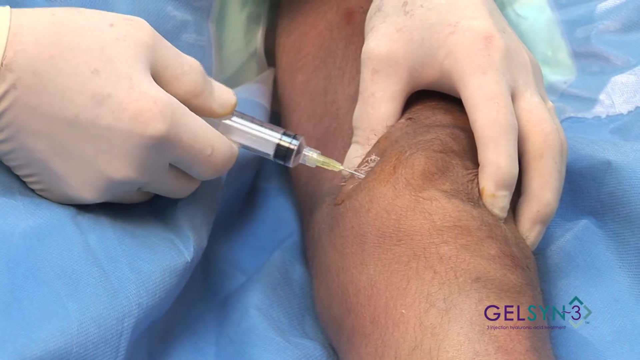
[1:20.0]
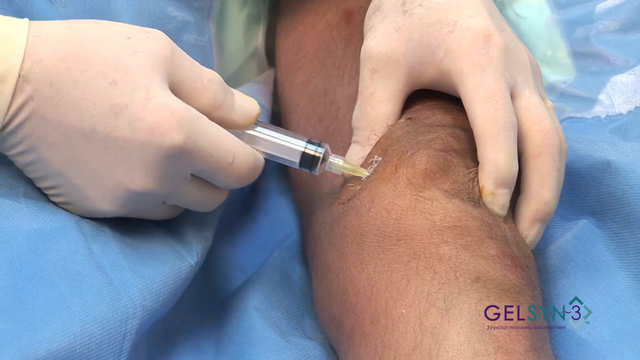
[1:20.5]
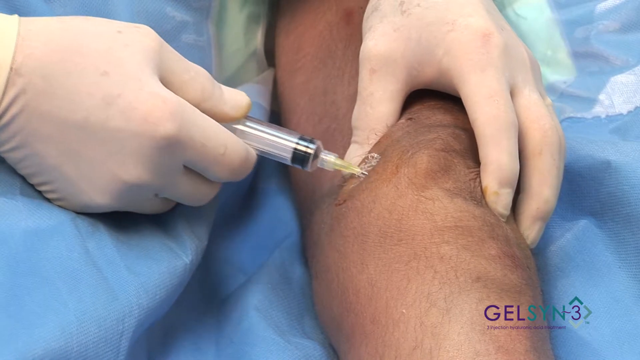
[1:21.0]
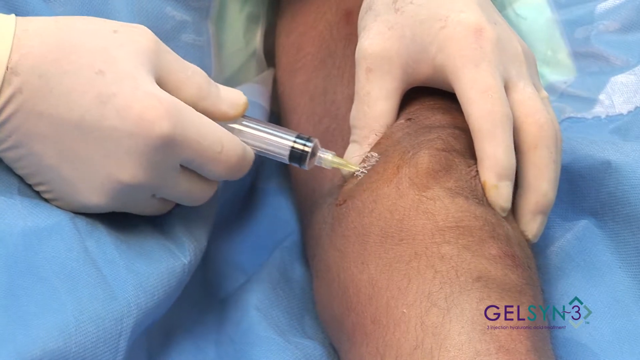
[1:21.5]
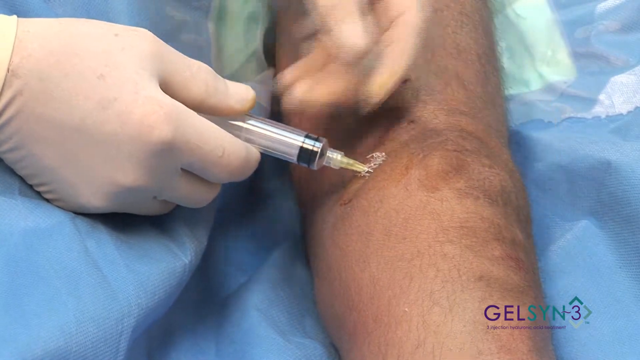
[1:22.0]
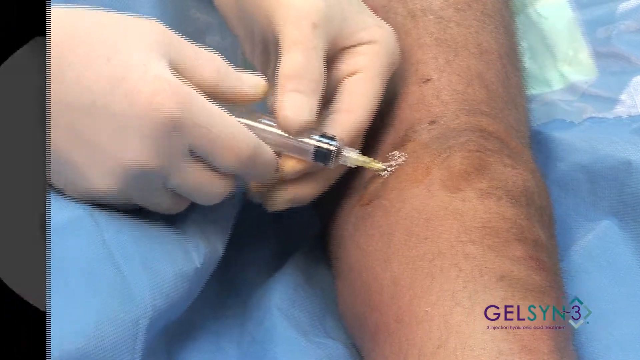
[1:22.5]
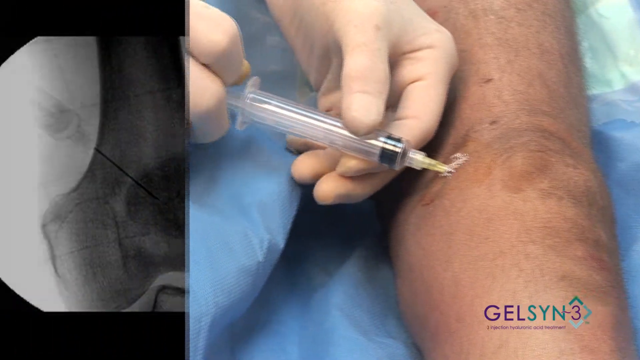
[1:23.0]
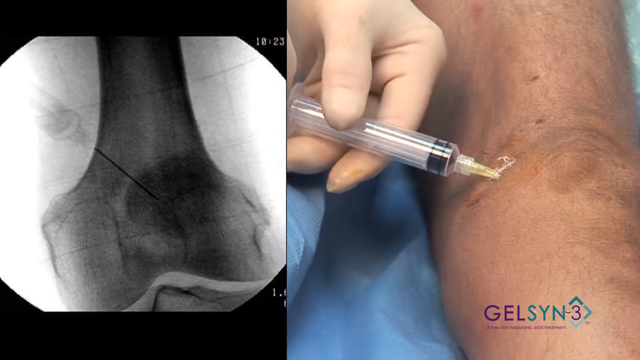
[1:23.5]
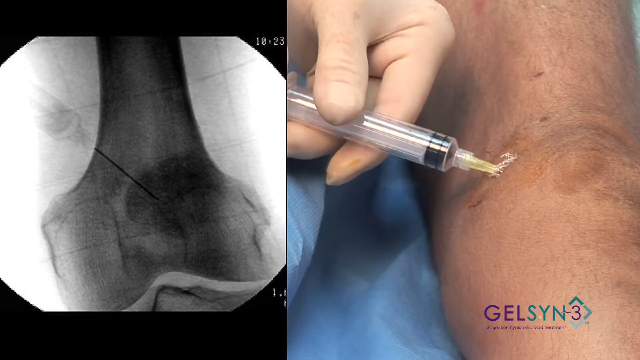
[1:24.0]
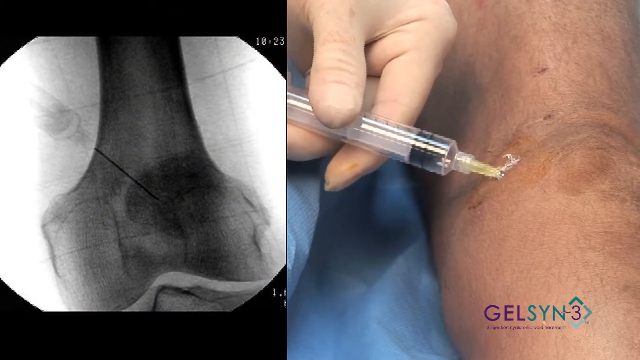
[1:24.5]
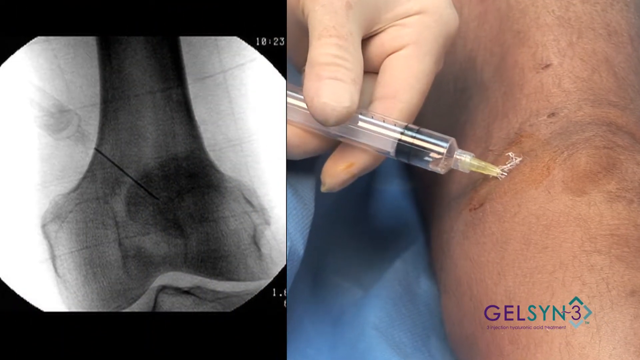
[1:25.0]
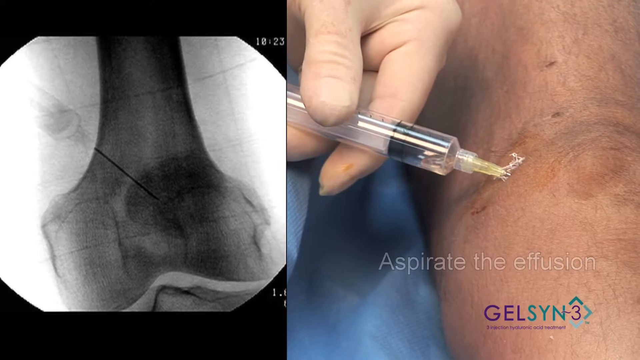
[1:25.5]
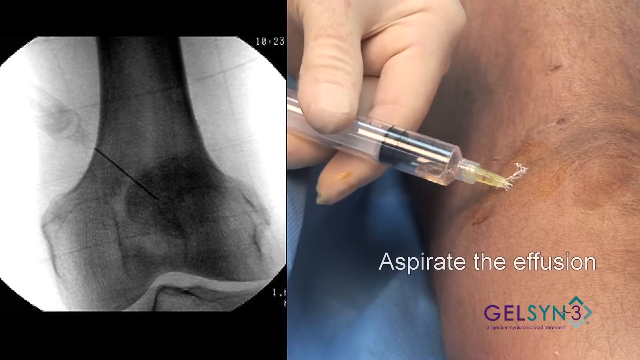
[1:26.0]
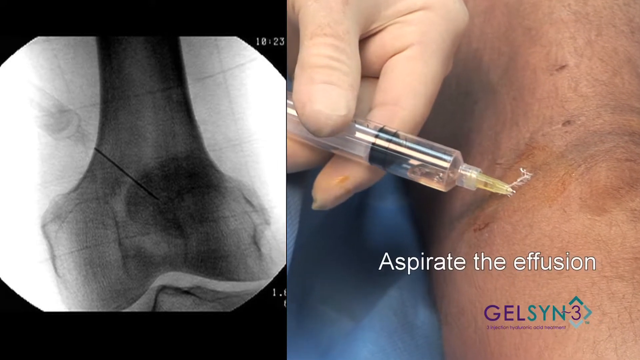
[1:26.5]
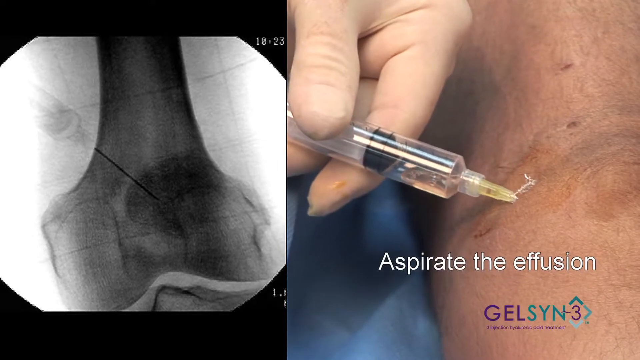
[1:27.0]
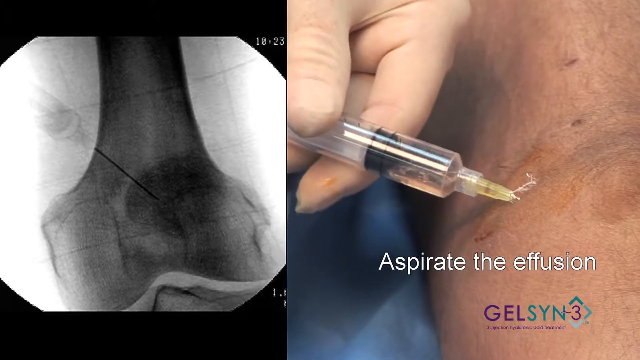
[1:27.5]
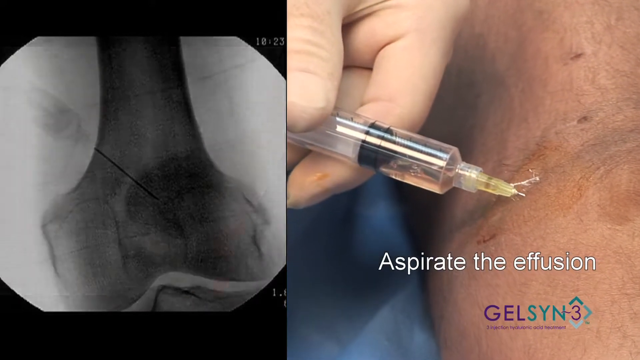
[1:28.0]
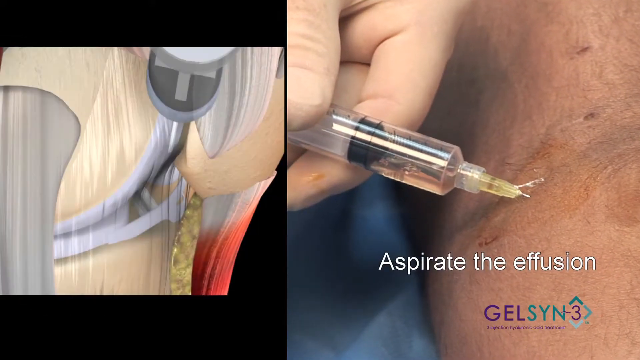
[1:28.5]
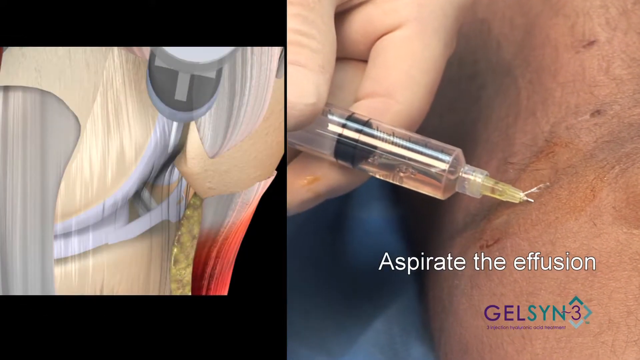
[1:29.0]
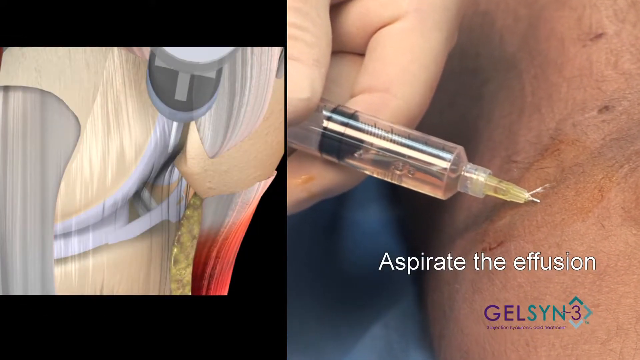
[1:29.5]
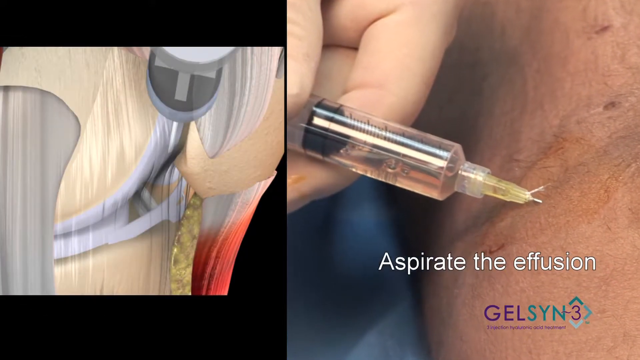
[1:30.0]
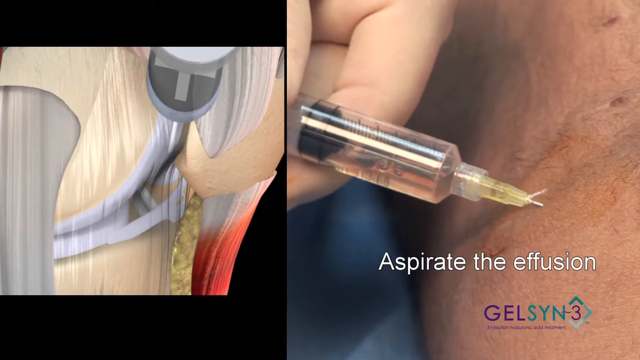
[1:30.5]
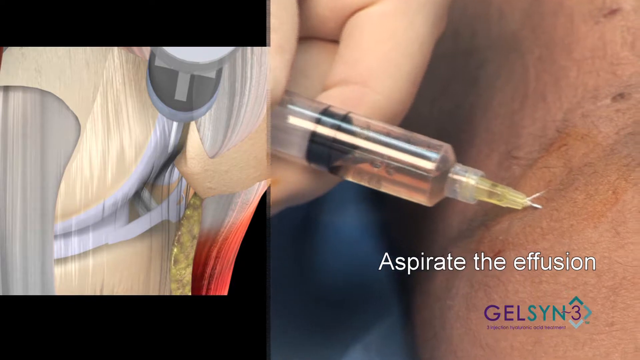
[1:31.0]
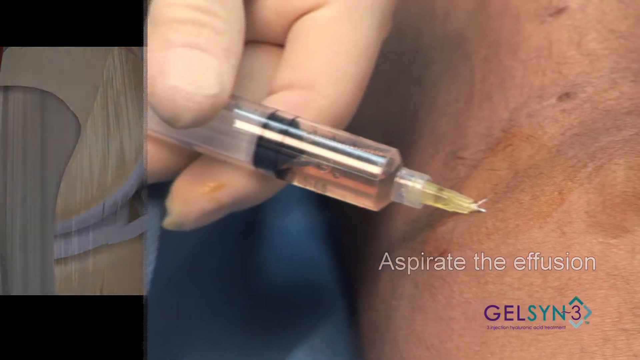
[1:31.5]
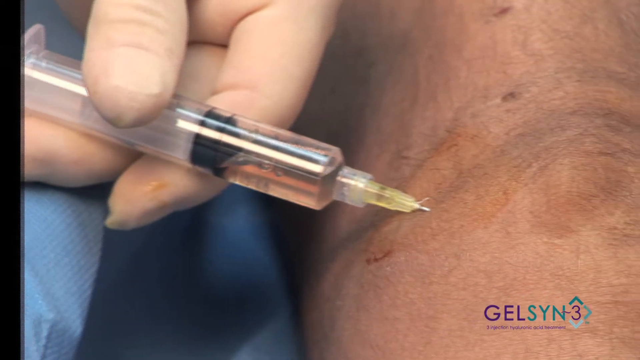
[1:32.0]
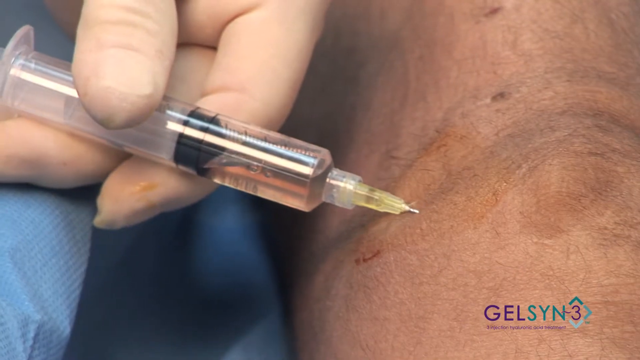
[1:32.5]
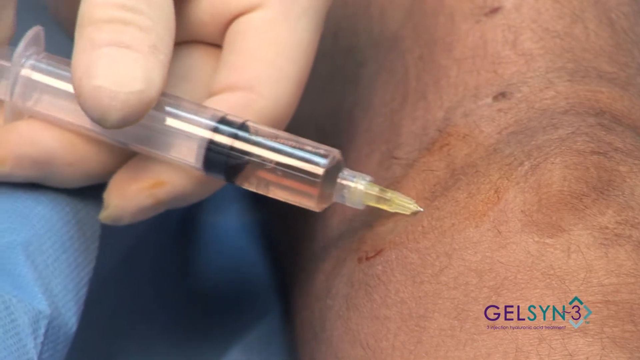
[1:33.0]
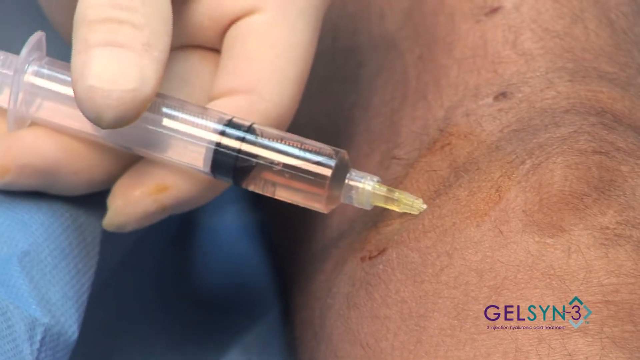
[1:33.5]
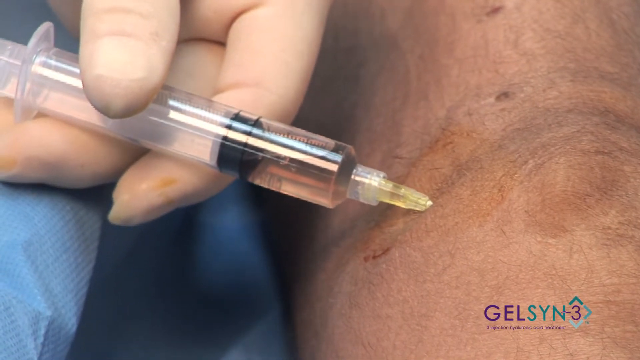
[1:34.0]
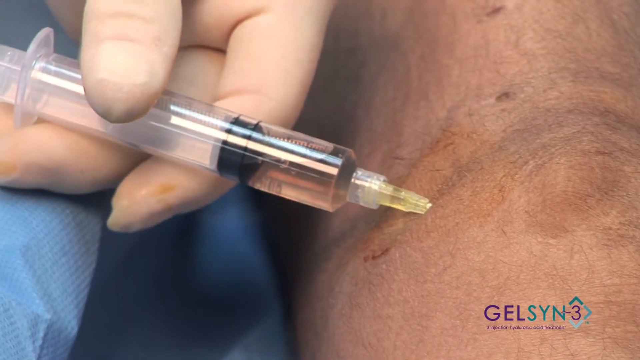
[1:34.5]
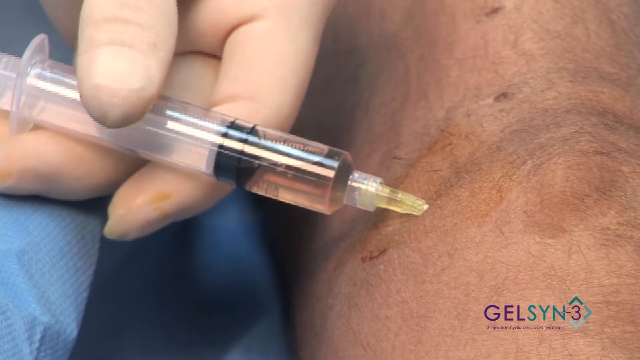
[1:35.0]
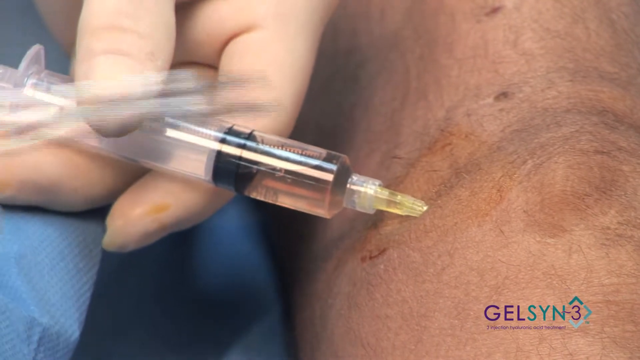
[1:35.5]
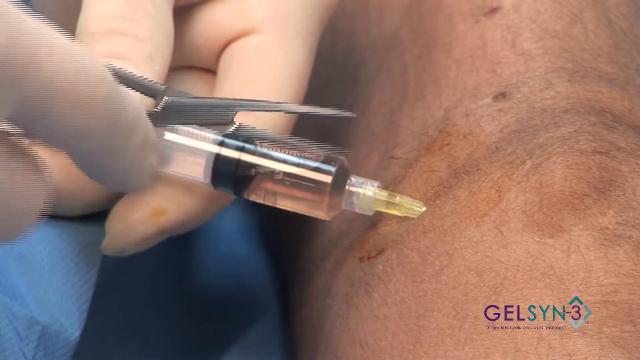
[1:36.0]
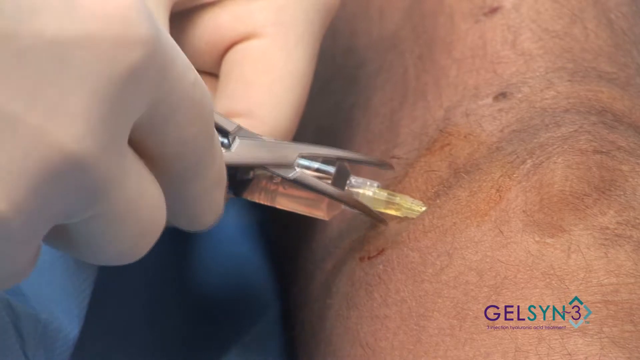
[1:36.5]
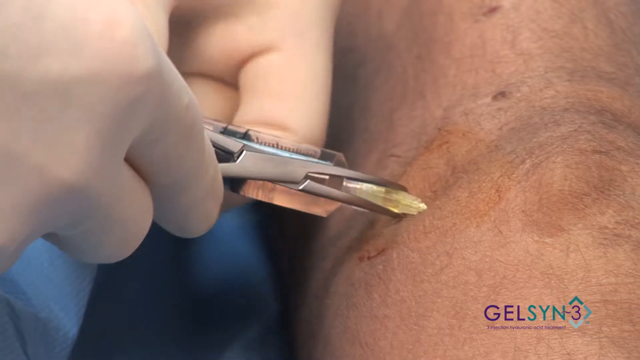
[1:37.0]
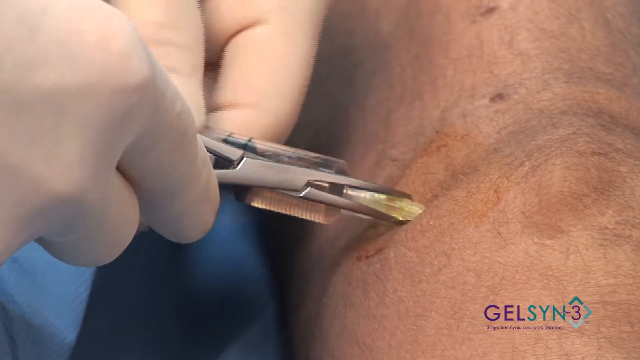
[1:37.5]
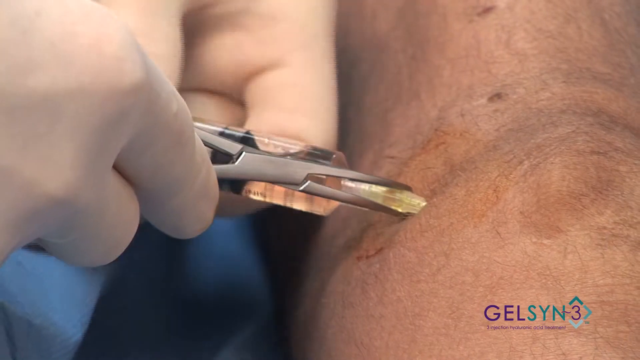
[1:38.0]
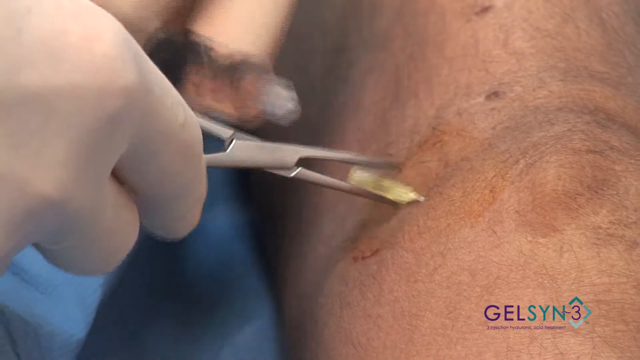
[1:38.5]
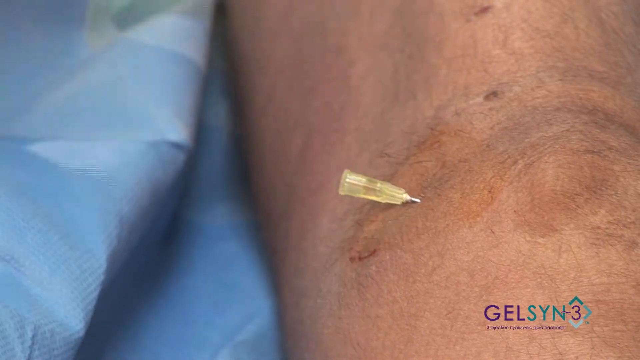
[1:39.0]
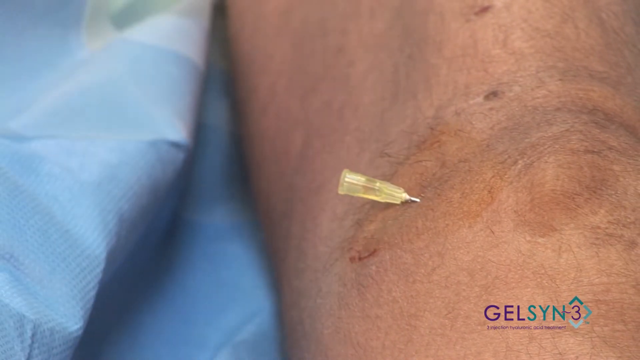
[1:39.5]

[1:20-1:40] The needle goes in deeply and is moved slightly back and forth, almost bouncing, apparently to make sure it is in. The left hand releases the knee and then holds the tip of the syringe. The black stopper moves backward and the syringe fills with a light pink liquid as it is drawn out, while white text in the lower right reads "aspirate the effusion." The screen then splits: the procedure on the knee is on the right, and an x-ray image of the knee is on the left. The left image then switches to an illustration of the knee in reds, yellows, tans and whites, showing a different view. The split screen goes away, returning to the full view of the procedure in close-up where the syringe is. The scissors return in the right hand and grasp the end of the syringe; as the syringe is pulled away, apparently the needle and a tiny plastic tip are left sticking out of the knee. The syringe and hands then leave the frame.